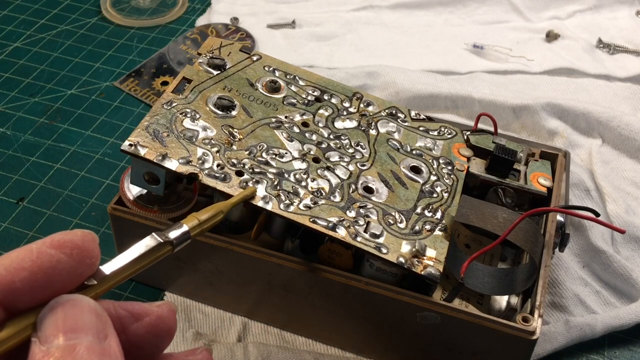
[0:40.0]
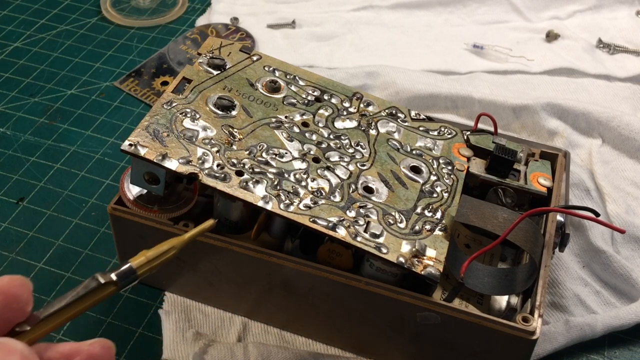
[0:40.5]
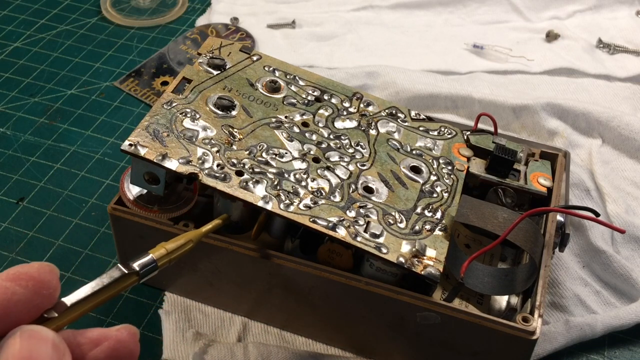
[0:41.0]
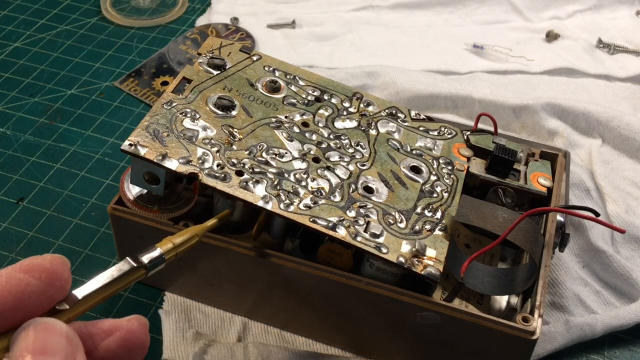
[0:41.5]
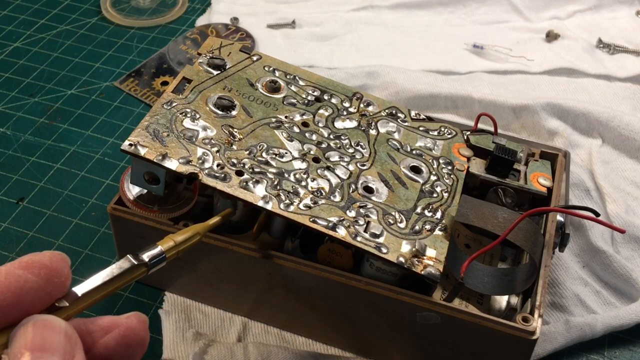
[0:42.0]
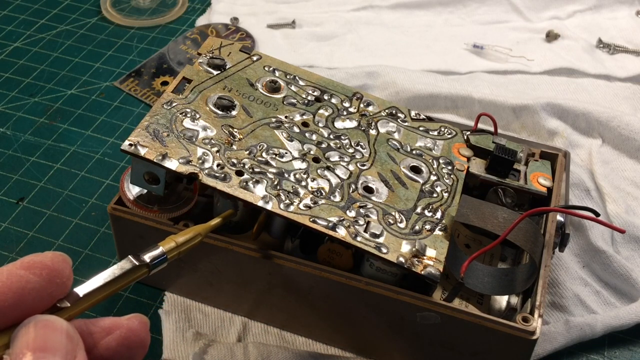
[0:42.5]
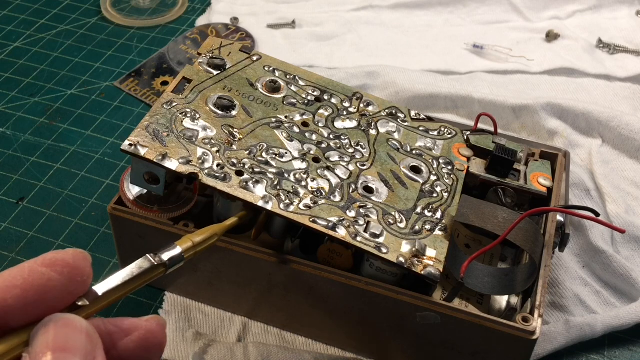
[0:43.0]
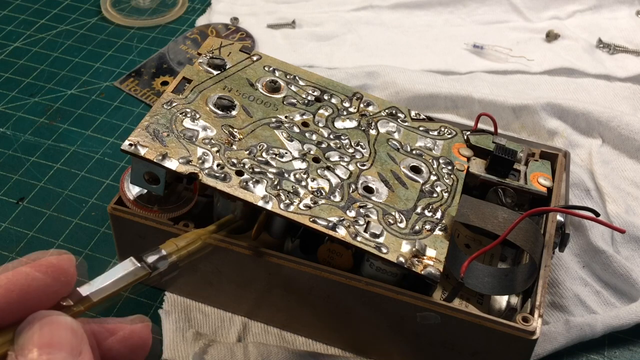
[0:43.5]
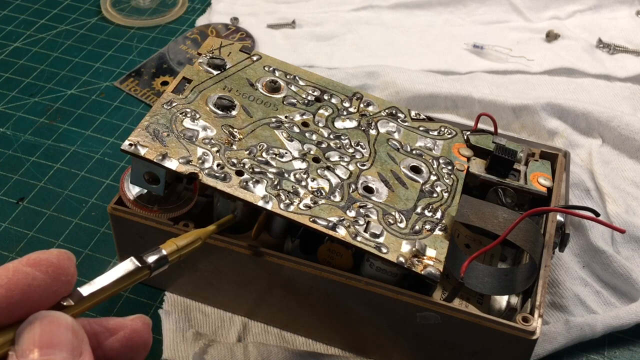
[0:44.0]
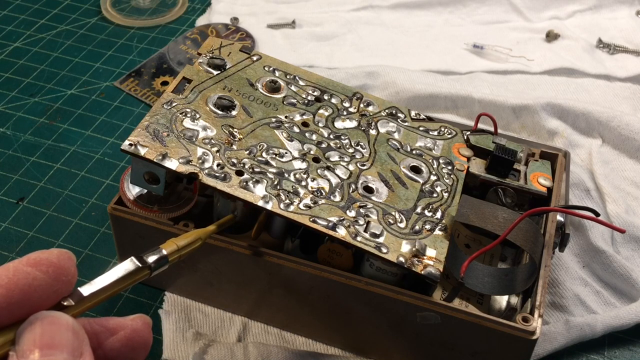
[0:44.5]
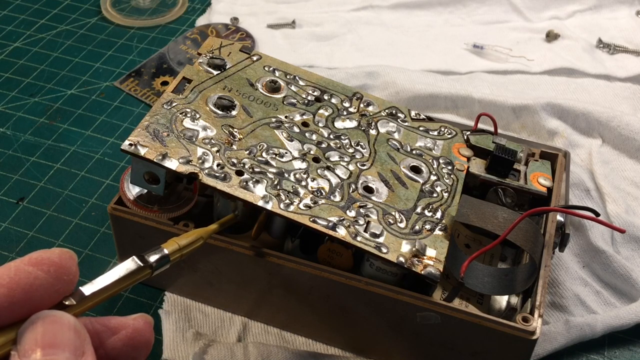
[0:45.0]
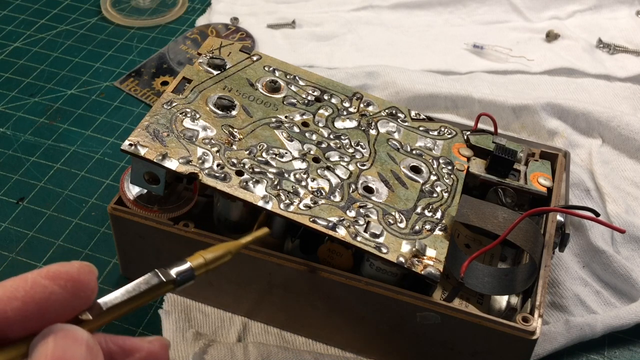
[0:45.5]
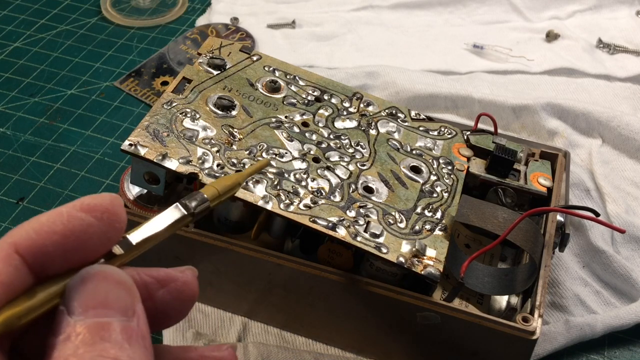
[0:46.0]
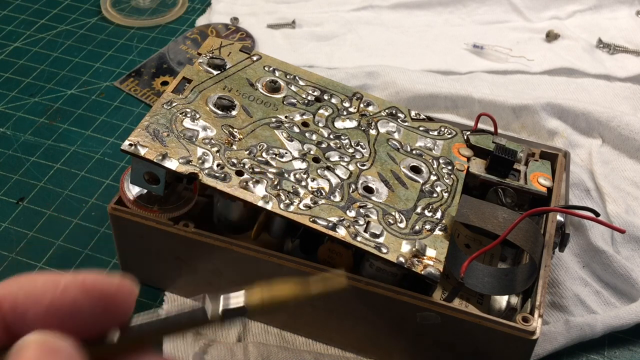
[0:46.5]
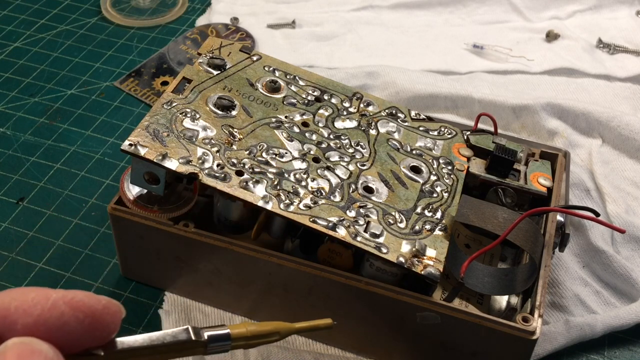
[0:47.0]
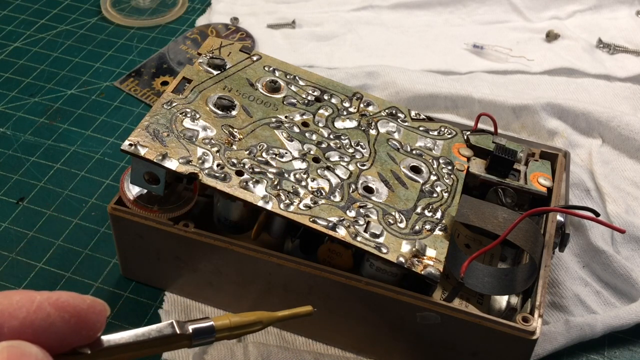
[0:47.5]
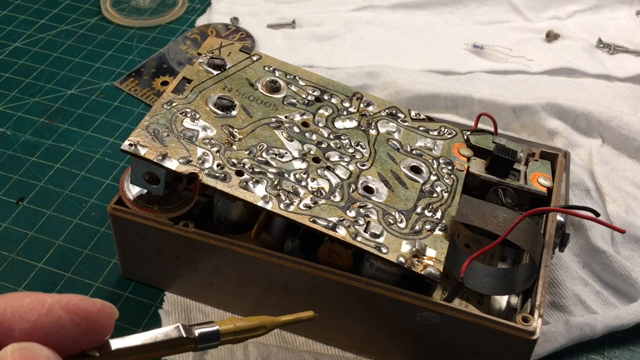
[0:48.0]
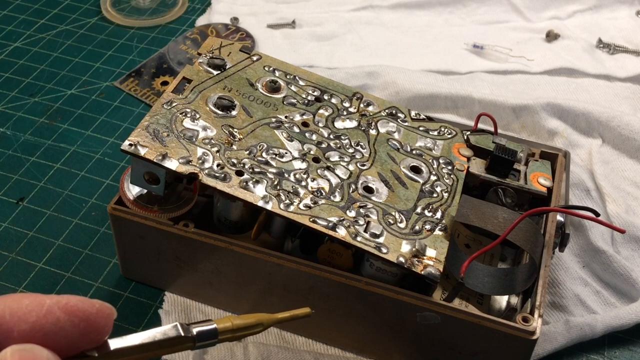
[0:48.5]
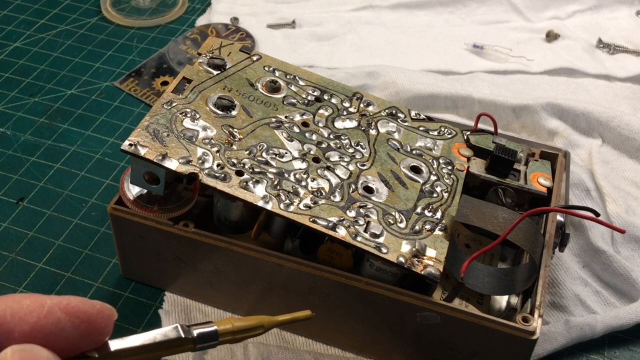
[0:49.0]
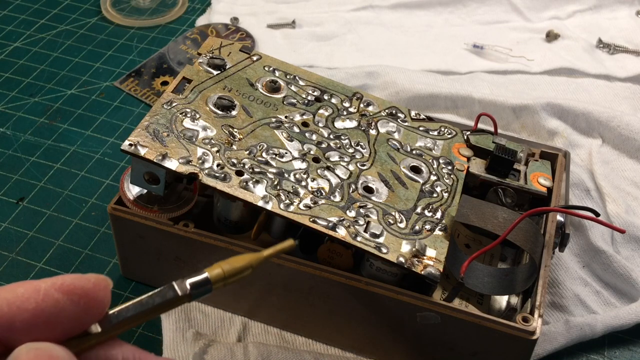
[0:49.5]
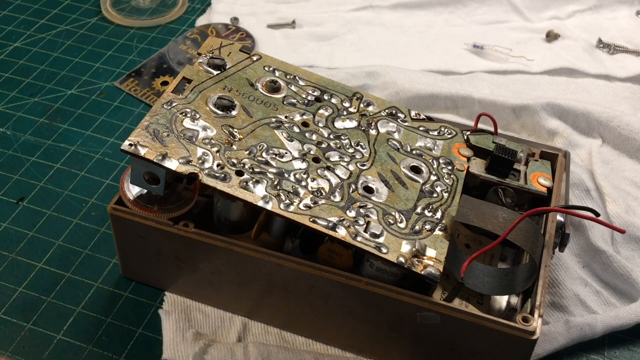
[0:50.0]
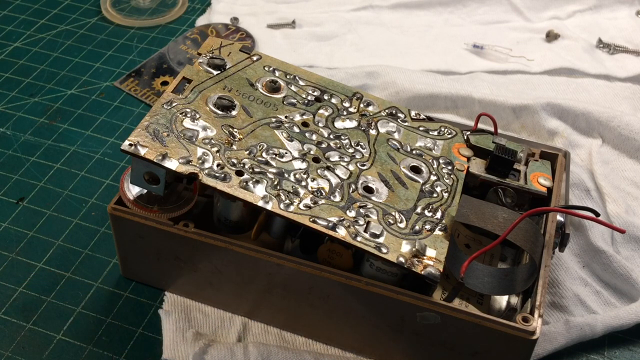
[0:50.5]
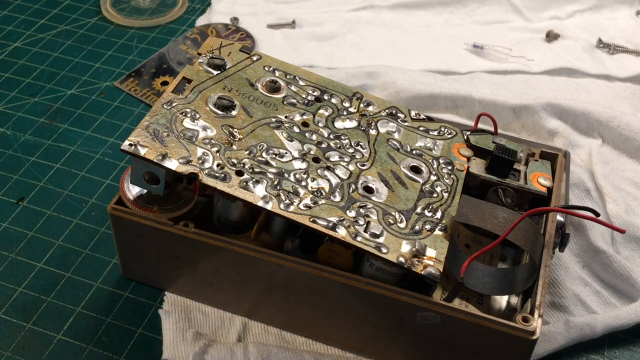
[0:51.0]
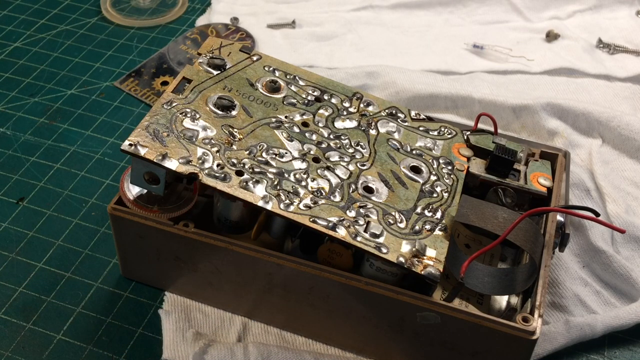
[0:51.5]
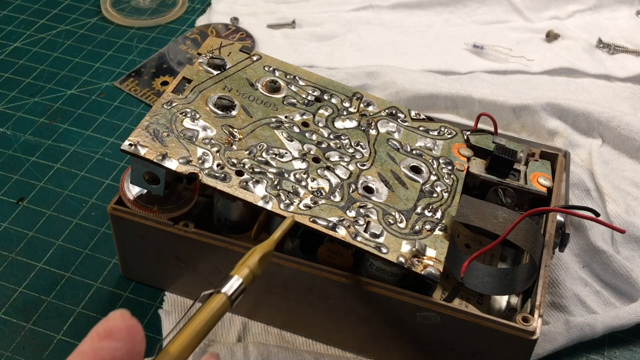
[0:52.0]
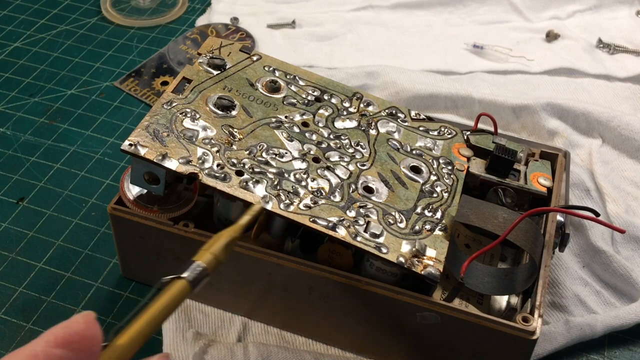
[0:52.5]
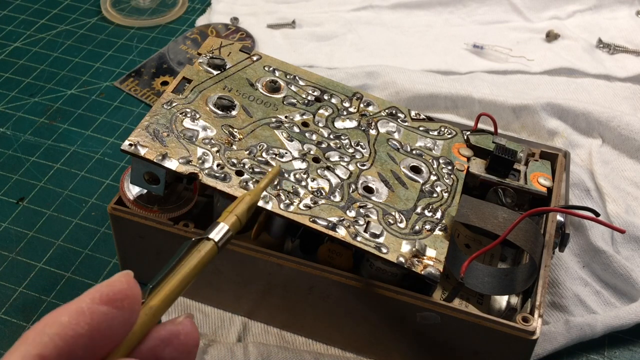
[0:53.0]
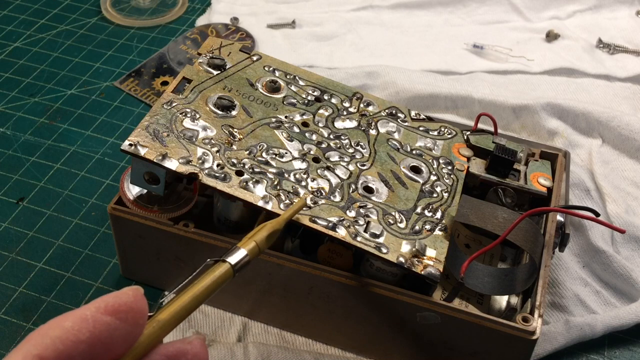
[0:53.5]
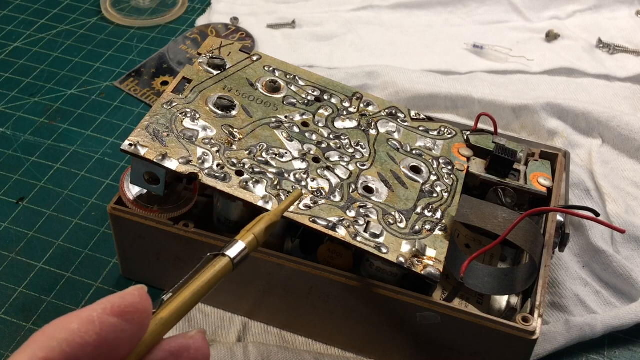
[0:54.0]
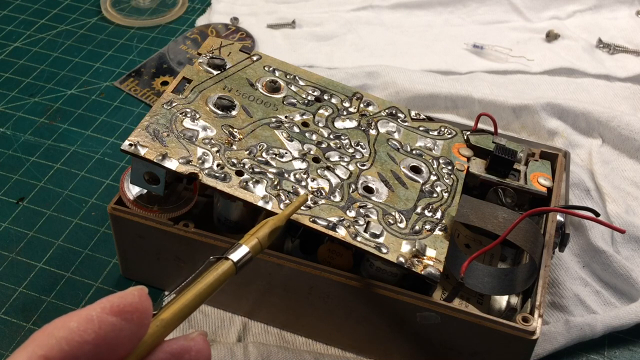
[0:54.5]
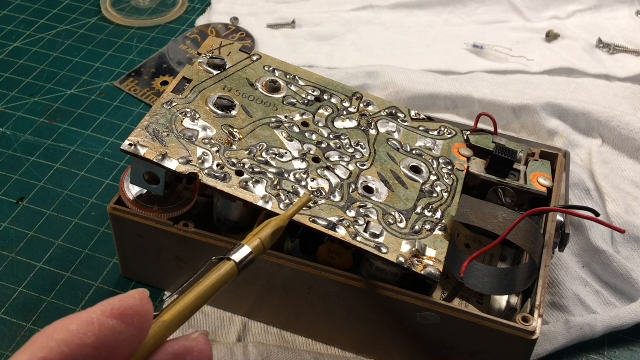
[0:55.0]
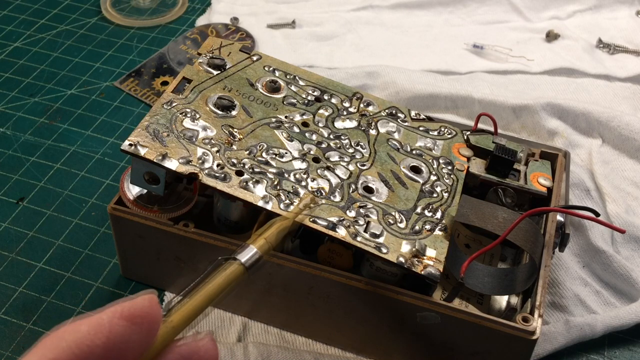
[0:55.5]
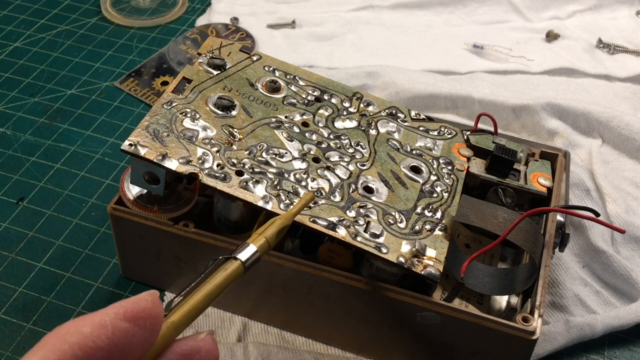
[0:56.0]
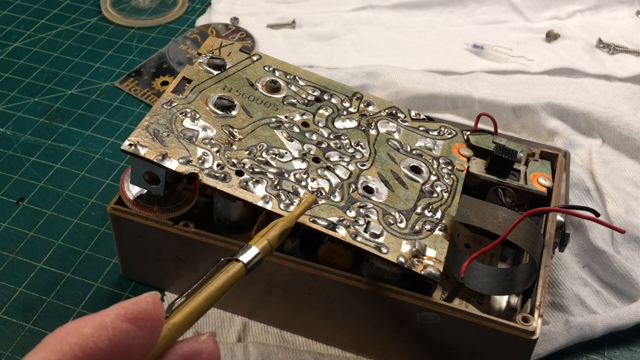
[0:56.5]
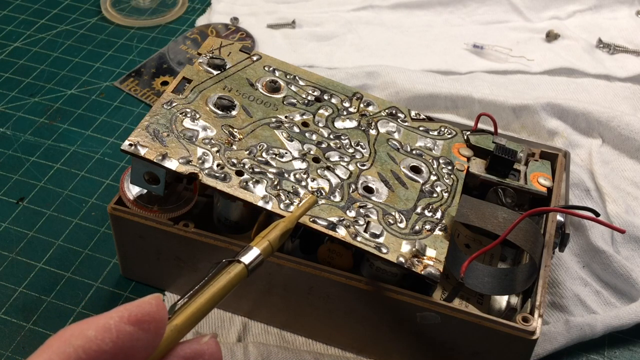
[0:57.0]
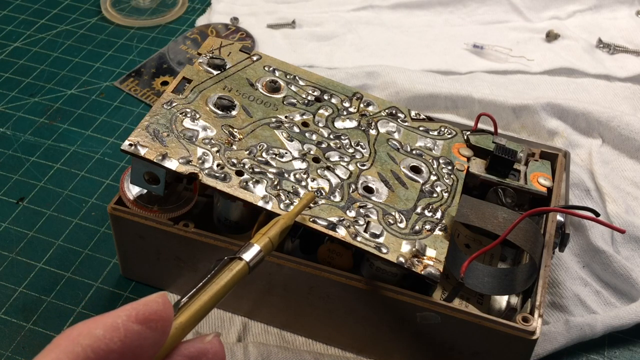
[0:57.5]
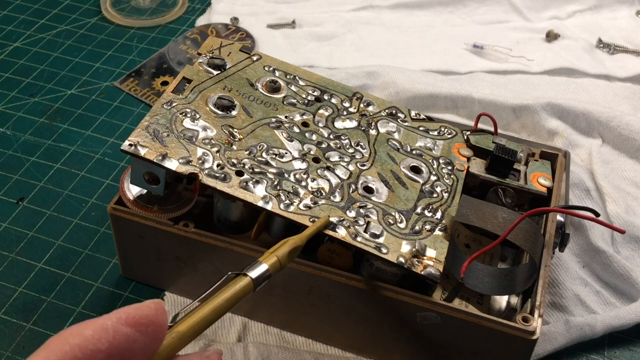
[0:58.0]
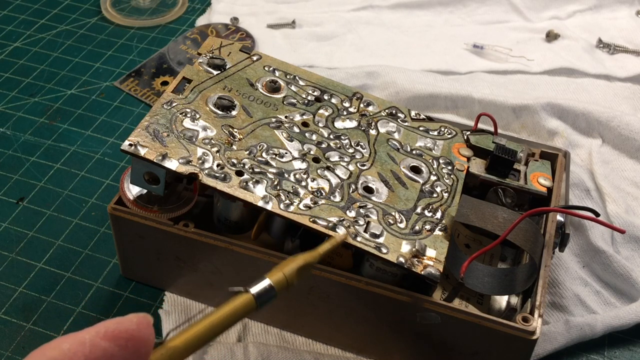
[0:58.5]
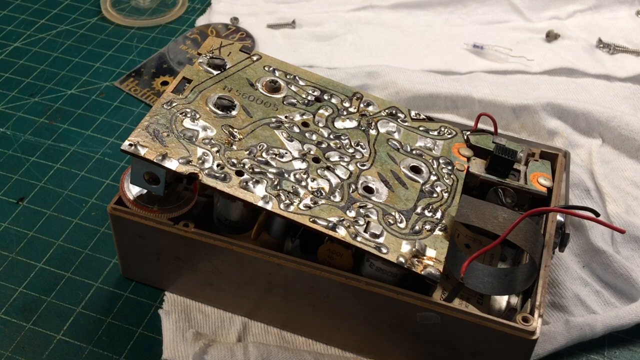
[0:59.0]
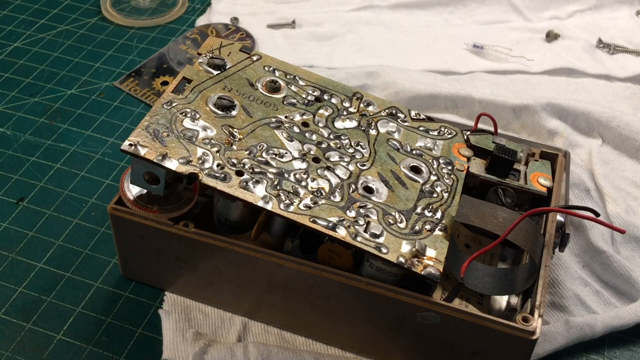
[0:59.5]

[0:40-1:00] The man holds the tool and points out different parts of the old radio, which is turned upside down, apparently showing its metal back, the wires and the electrical side. He makes gestures while showing different parts, possibly talking, but does nothing else. The scene does not change: the same white sheet is in the background with some screws on it, which were also present earlier, and the green board is still in the background, with the whole scene set on it.